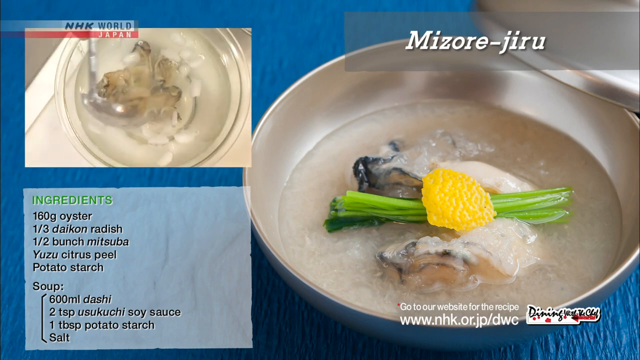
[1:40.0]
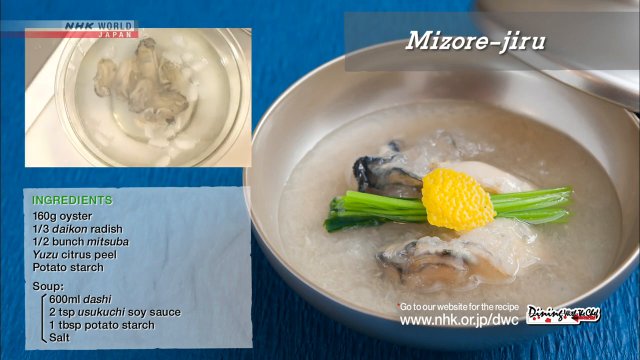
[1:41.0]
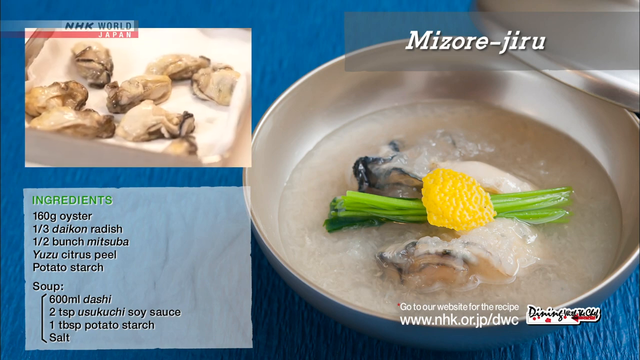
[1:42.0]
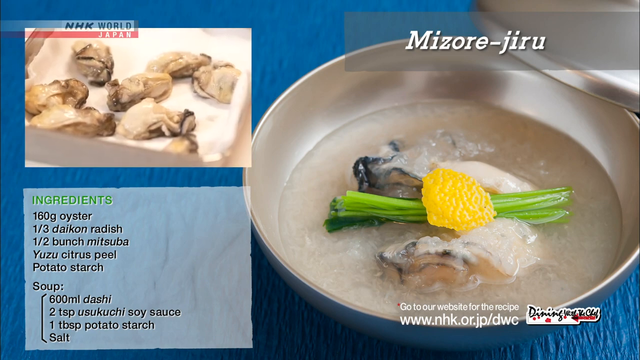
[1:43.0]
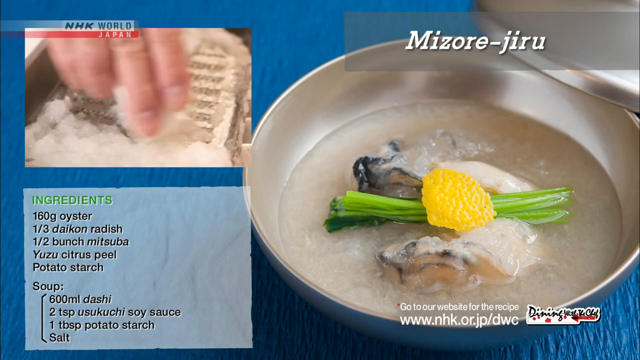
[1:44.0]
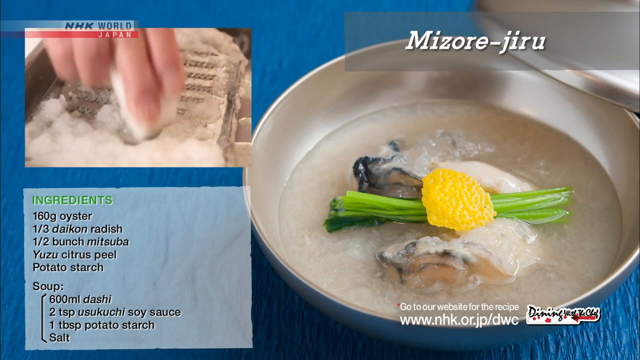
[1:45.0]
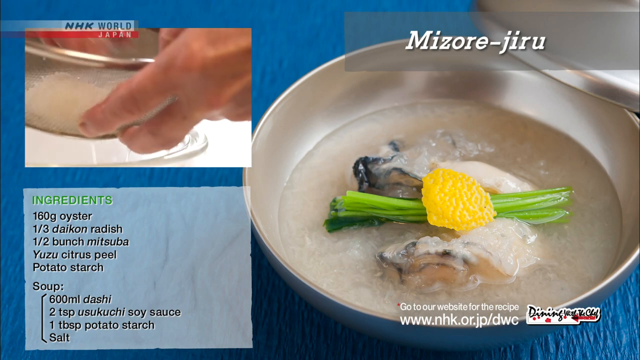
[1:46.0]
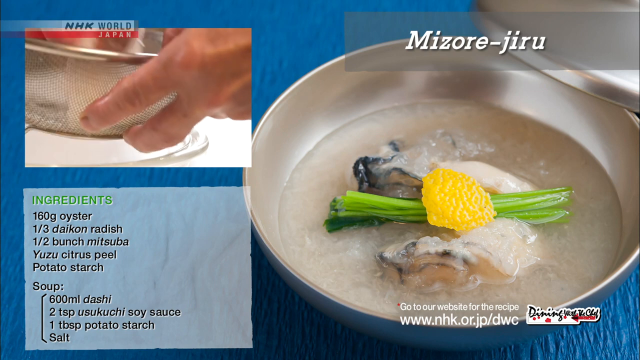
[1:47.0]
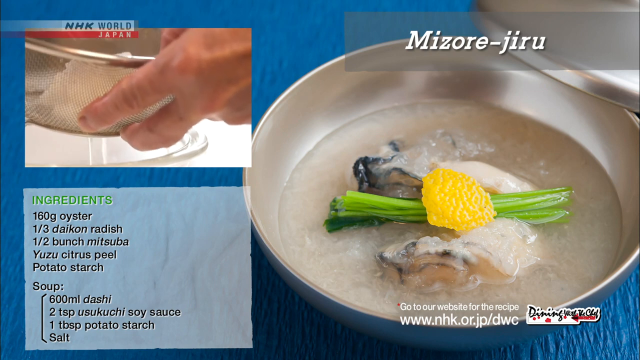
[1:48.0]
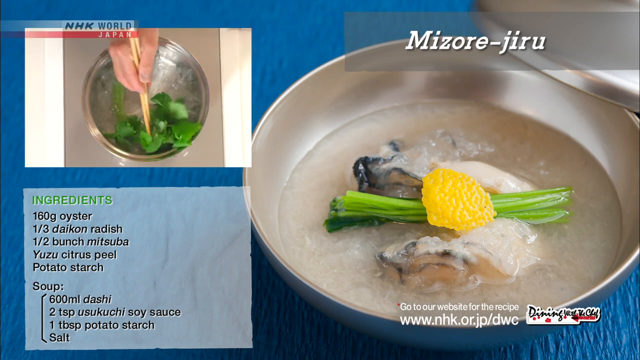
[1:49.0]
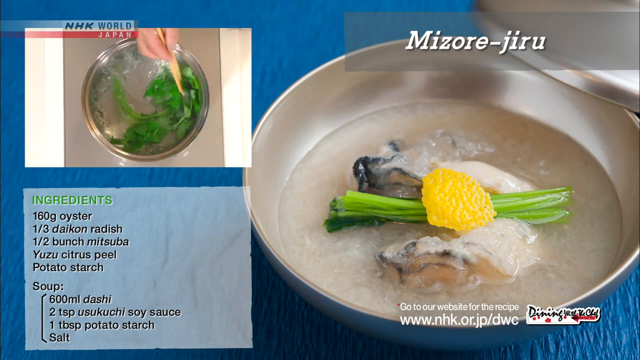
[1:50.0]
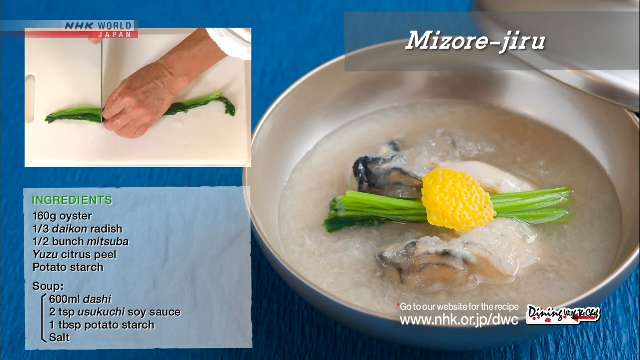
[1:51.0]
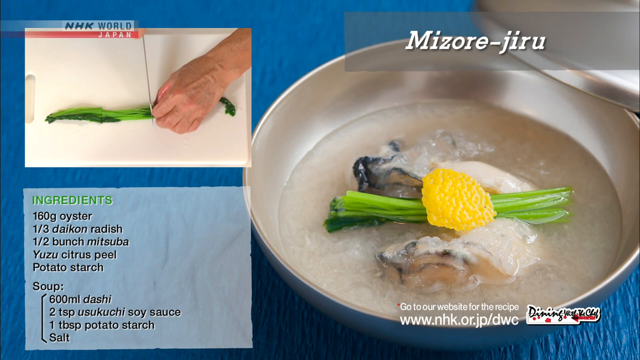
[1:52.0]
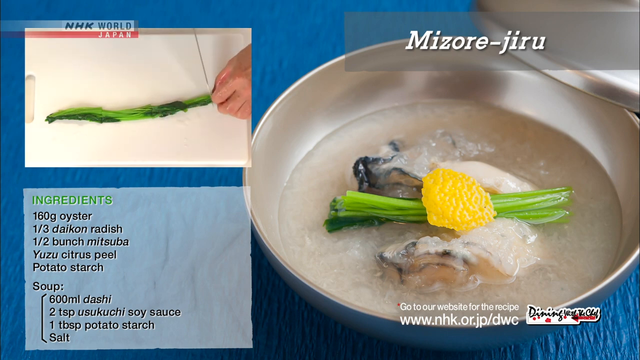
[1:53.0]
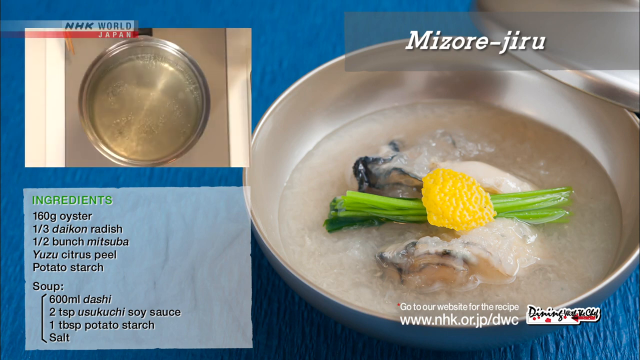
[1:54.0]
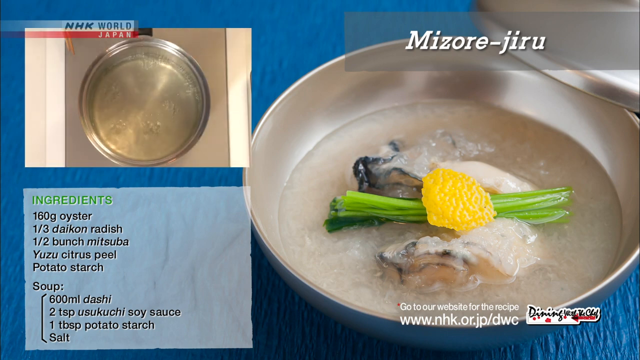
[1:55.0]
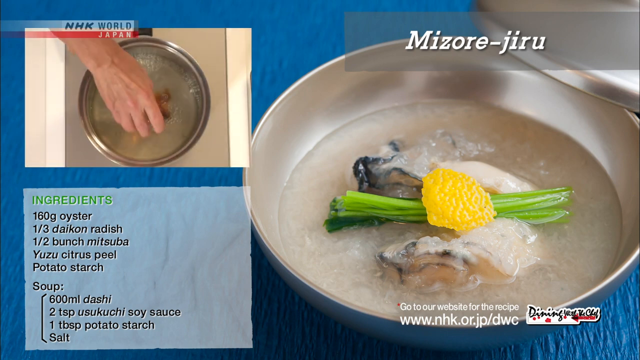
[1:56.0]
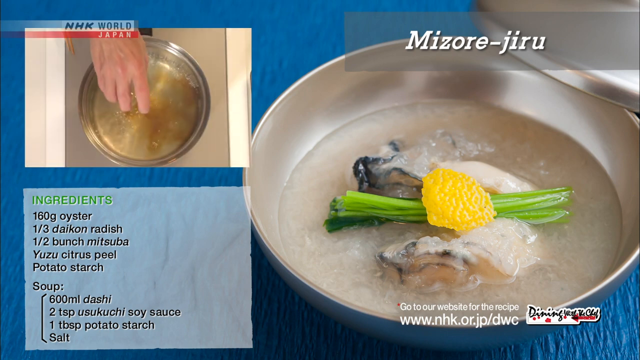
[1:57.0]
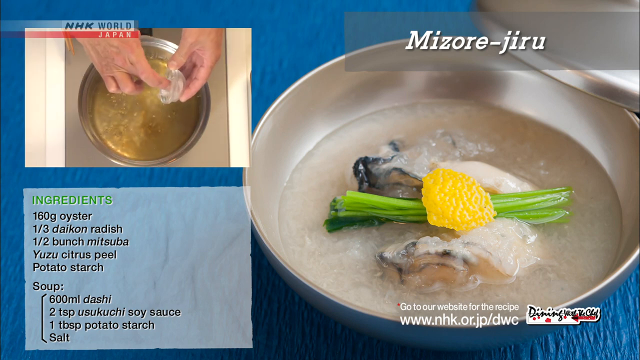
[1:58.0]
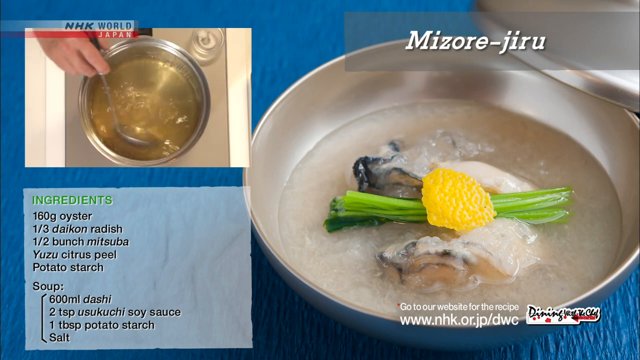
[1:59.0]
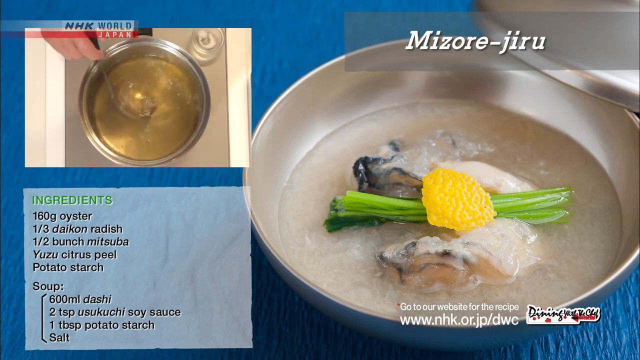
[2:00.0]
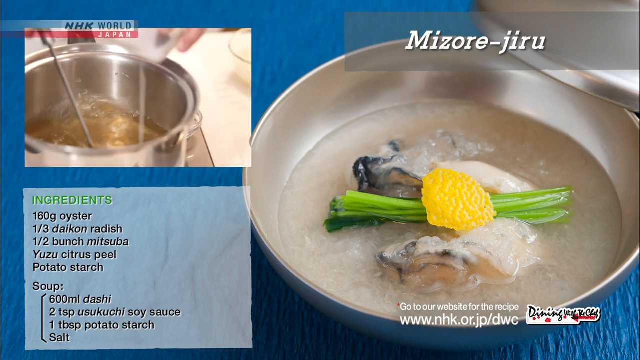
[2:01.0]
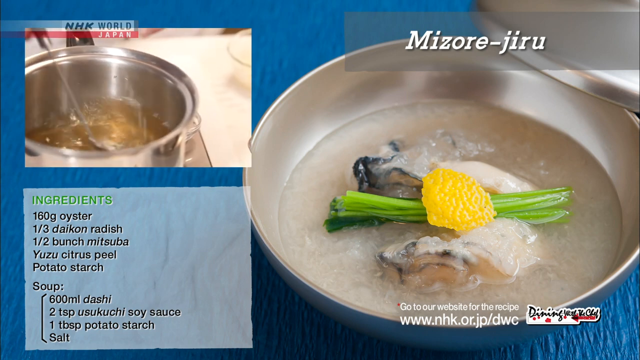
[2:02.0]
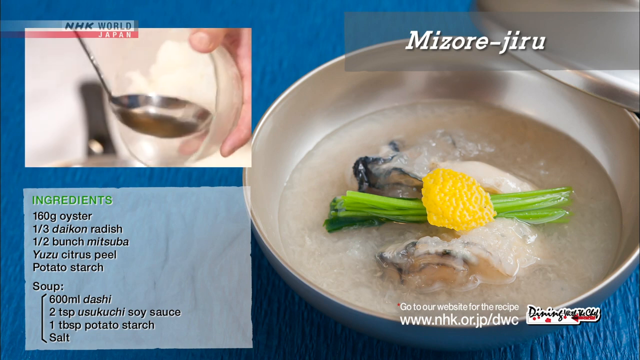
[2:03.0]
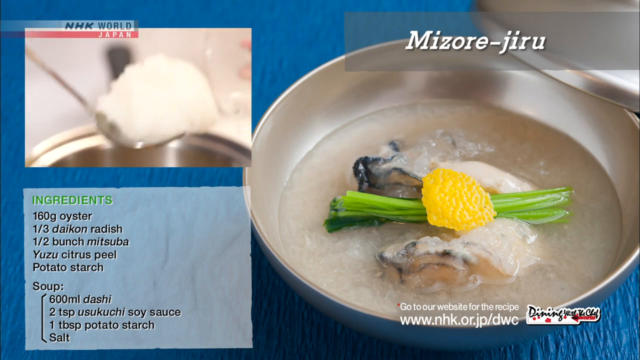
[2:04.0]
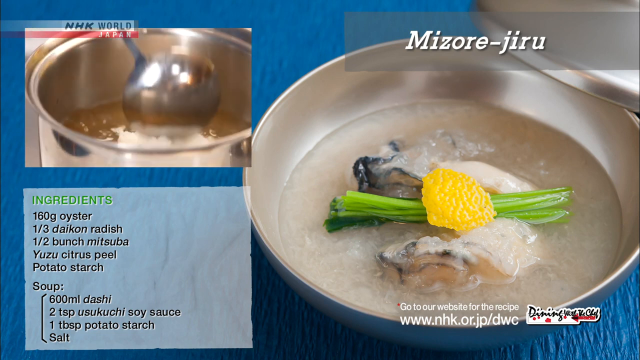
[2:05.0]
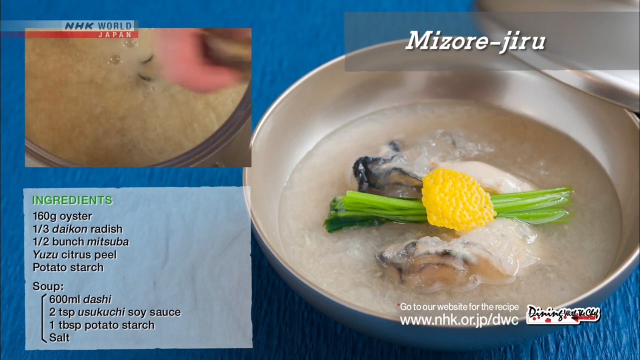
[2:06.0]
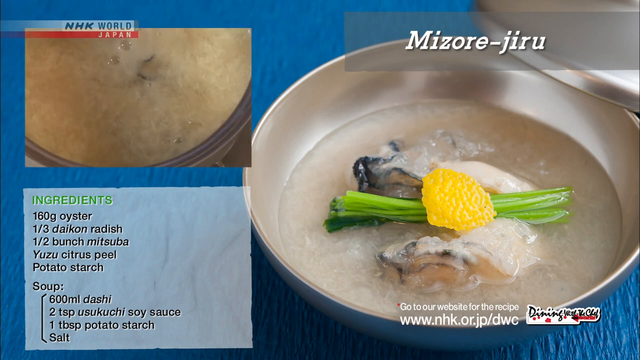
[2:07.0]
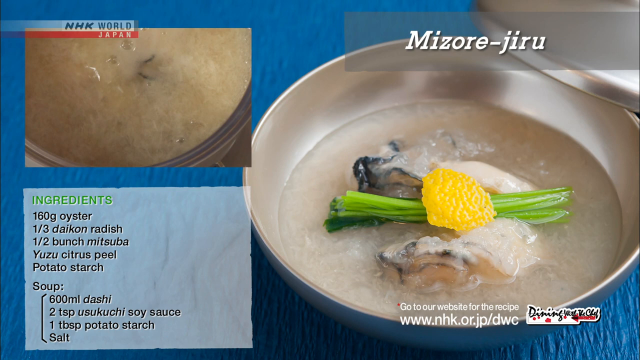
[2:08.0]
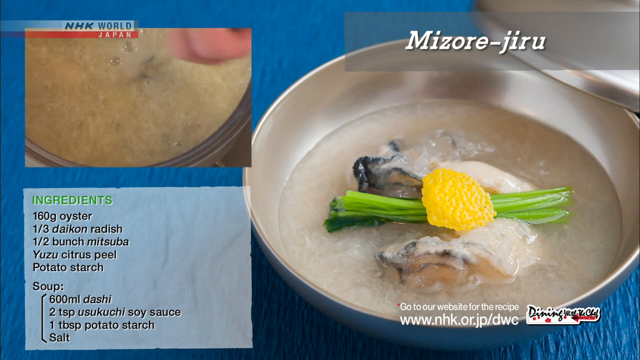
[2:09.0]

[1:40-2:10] A tin bowl holds the mizori-jiru, which seems to be some sort of rice porridge with oyster and perhaps a yellow fish roe on top, as well as grains. An ingredient list on the left side of the screen lists 160g of oyster, 1 third of a daikon radish, half a bunch of mitsuba, yuzu citrus peel, and potato starch, and for the soup, 600ml dashi, 2 tsp usukuchi soy sauce, 1 tbsp potato starch, and salt. In the upper left-hand corner, a chef prepares the dish. He washes the pieces of oyster, places them out on a piece of paper towel, covers them in a powder, and places them into boiling water. Once they are cooked, he places the oysters into a bowl with water and ice, then back onto a tray with what looks to be a paper towel underneath. He then rubs what is apparently the daikon radish on a very fine grater. Next he puts grains into boiling water, shrinking them down, and cuts them with a knife; these appear to be the grains on top of the dish in the image. He then makes some sort of broth, apparently adding the potato starch, the daikon radish and the oysters to it.